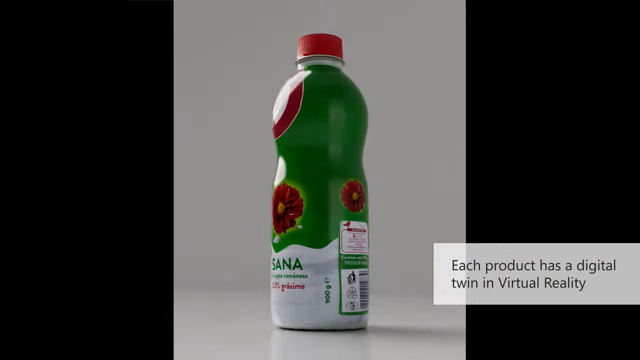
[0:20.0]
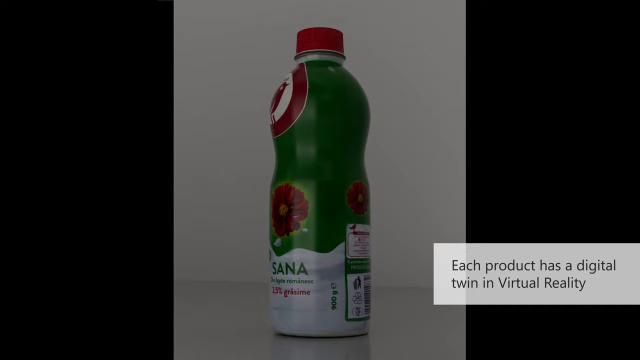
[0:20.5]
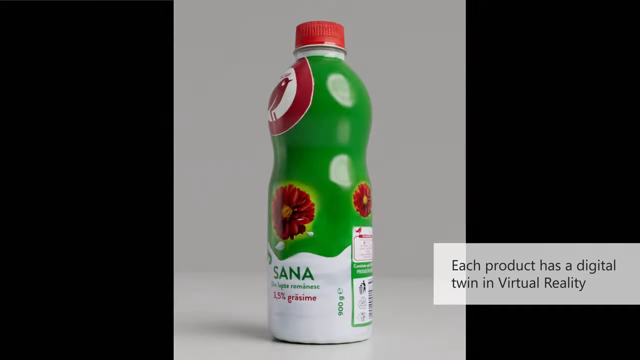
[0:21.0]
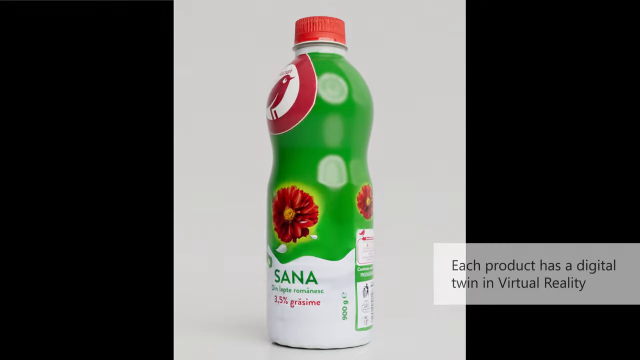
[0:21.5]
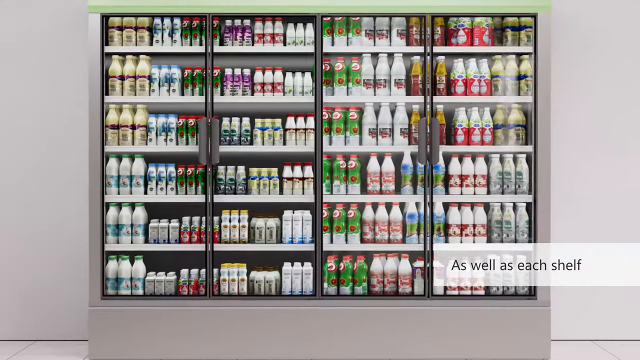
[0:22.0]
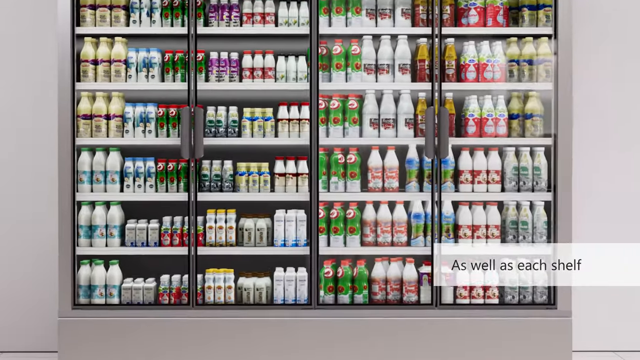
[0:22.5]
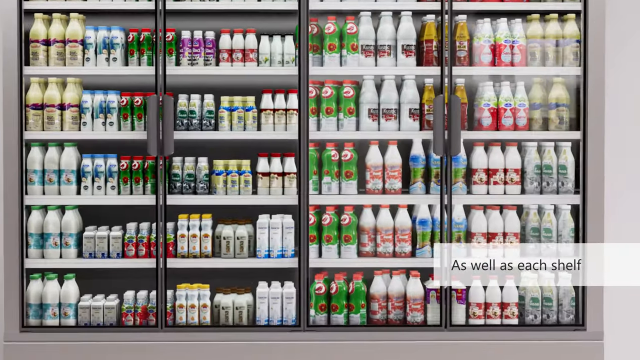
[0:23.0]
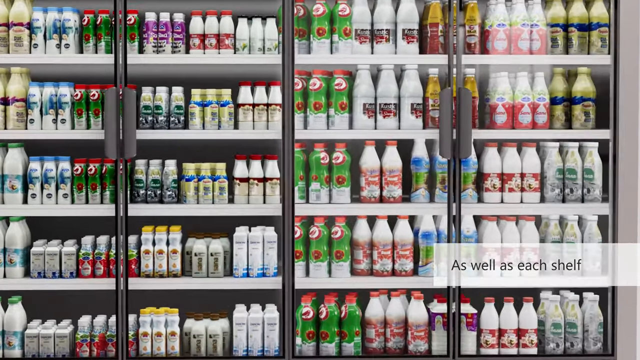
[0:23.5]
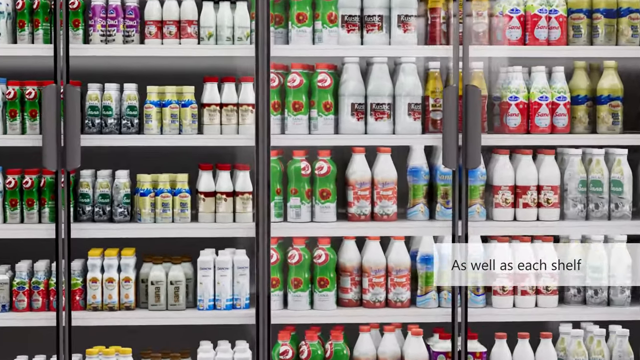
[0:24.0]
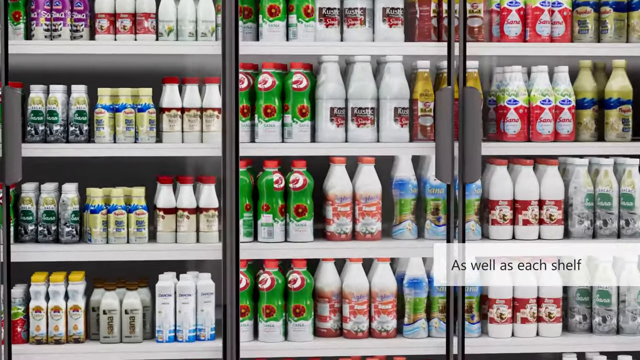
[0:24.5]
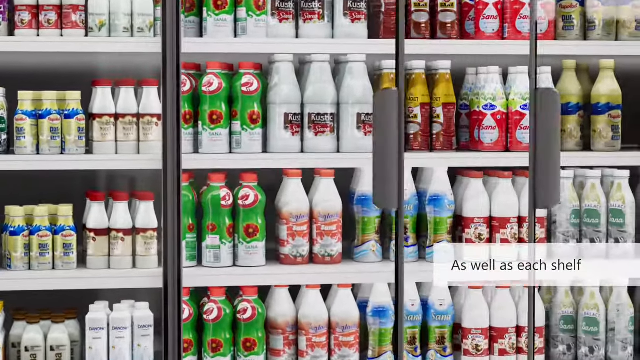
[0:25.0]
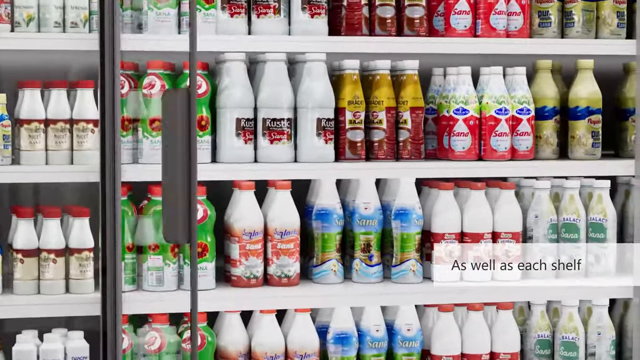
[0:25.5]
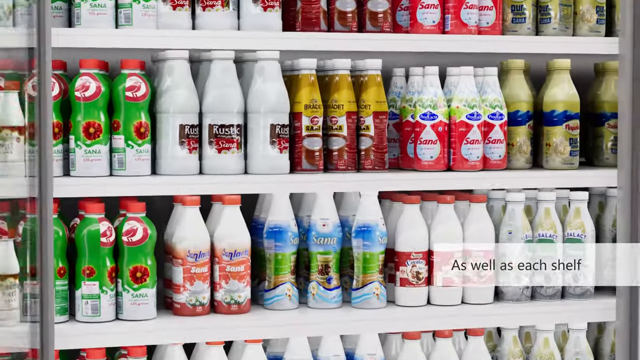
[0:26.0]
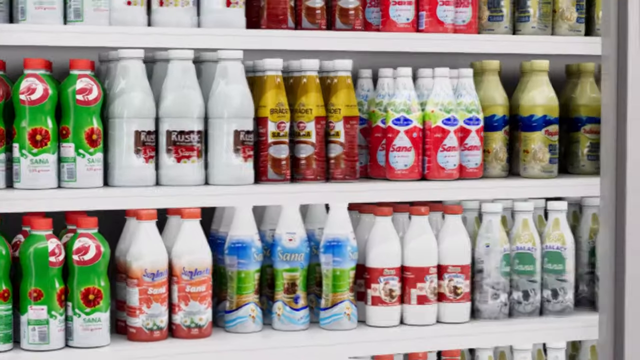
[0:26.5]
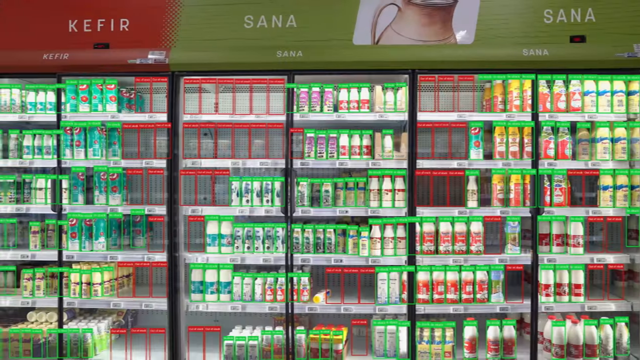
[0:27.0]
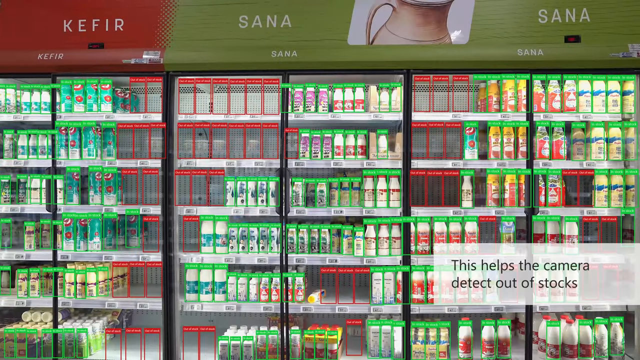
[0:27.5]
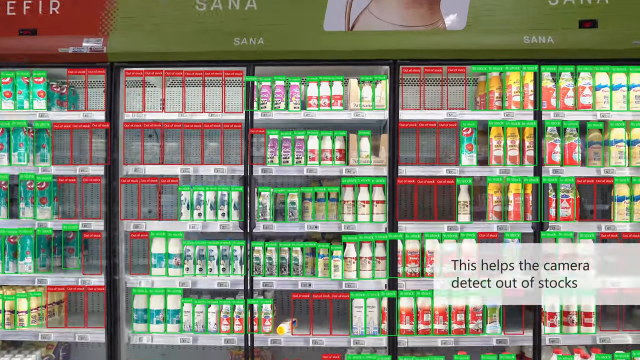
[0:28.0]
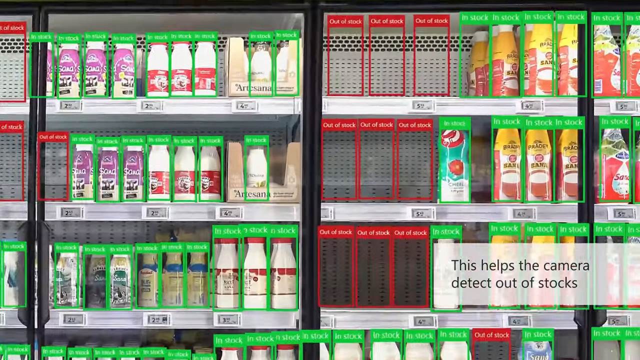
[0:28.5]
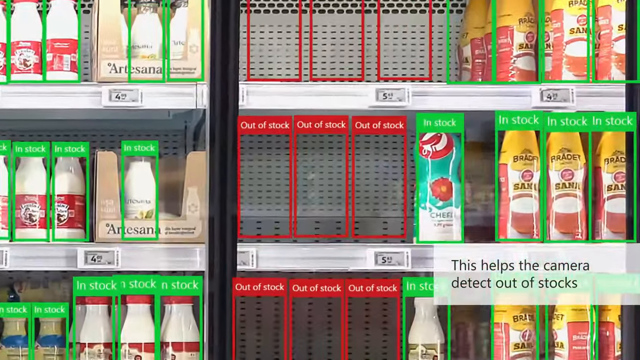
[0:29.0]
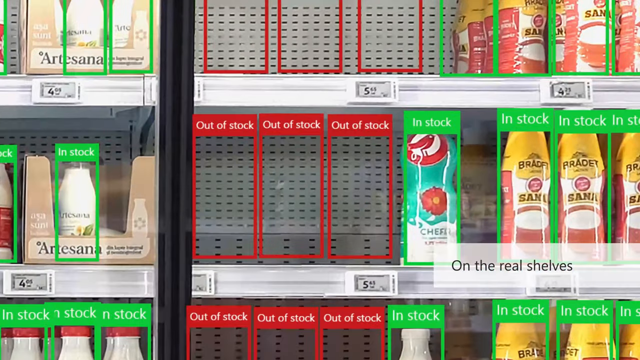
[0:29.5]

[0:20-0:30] A close-up shows a kind of green beverage bottle with a red flower on it. A text box appears that says "each product has a digital twin in virtual reality." In the next shot, the same item is on a real store shelf surrounded by other products. Some shelf labels read "in stock," while others are clearly marked "out of stock."